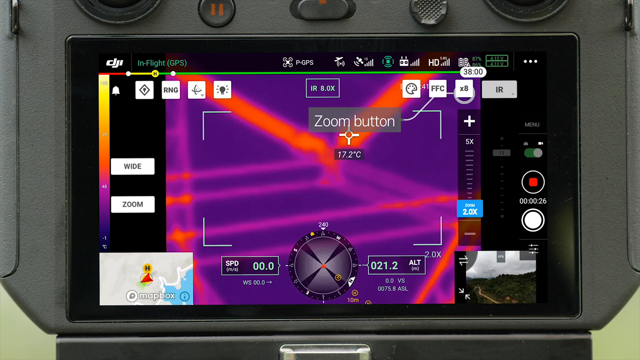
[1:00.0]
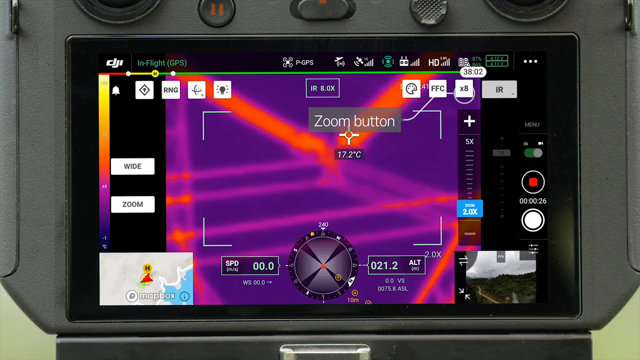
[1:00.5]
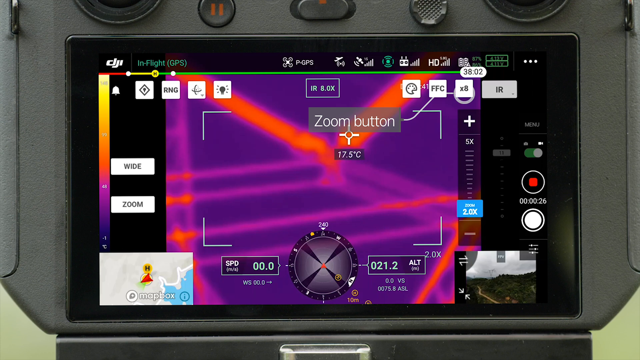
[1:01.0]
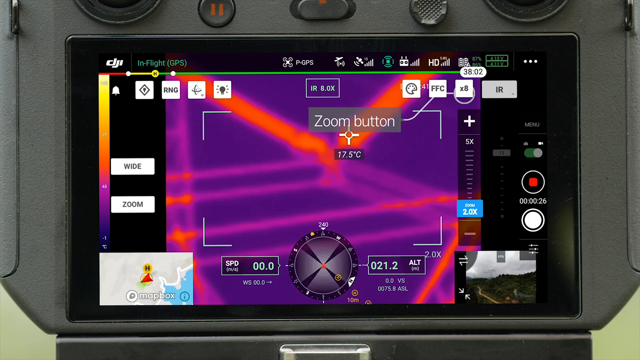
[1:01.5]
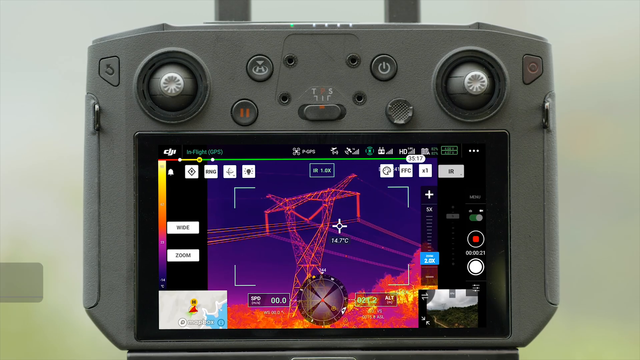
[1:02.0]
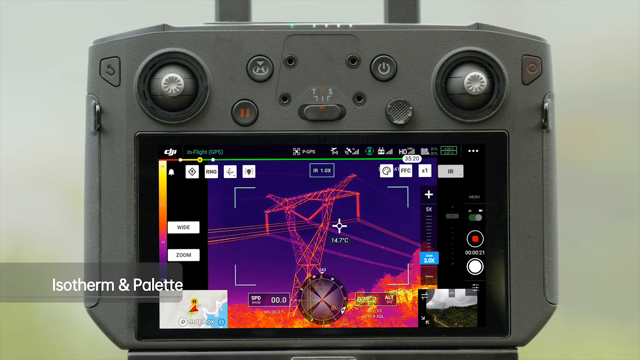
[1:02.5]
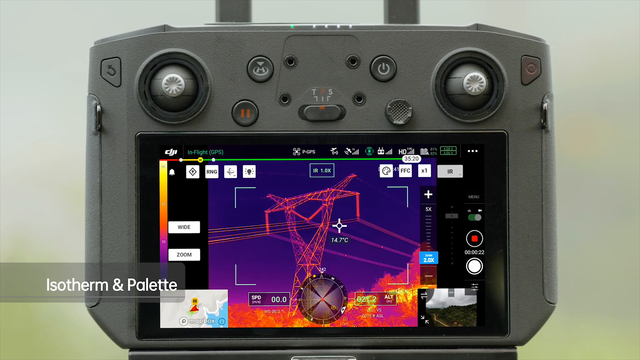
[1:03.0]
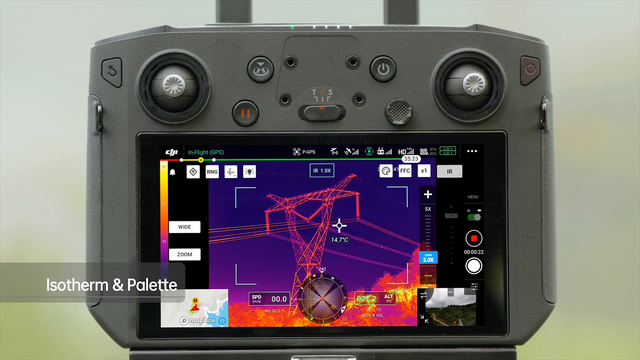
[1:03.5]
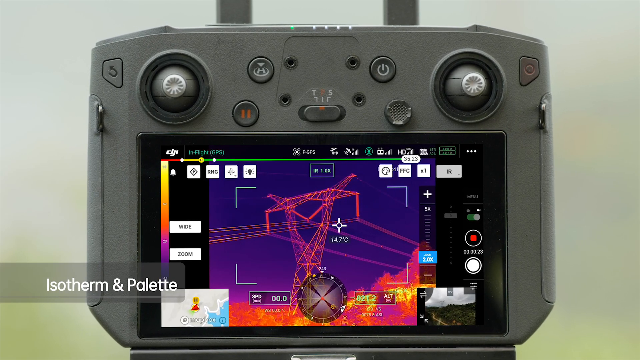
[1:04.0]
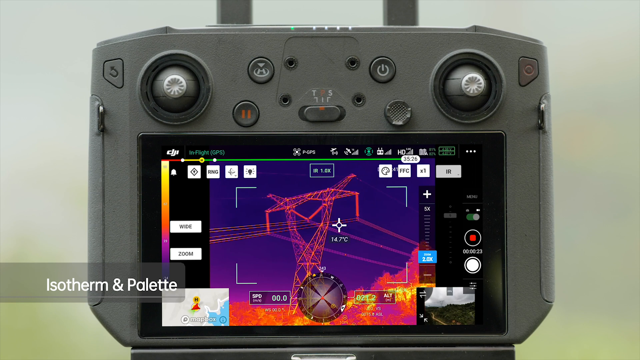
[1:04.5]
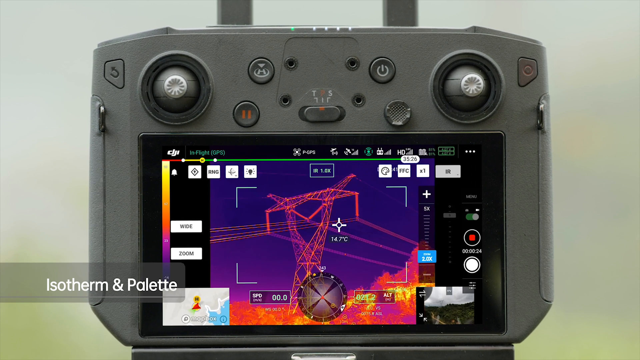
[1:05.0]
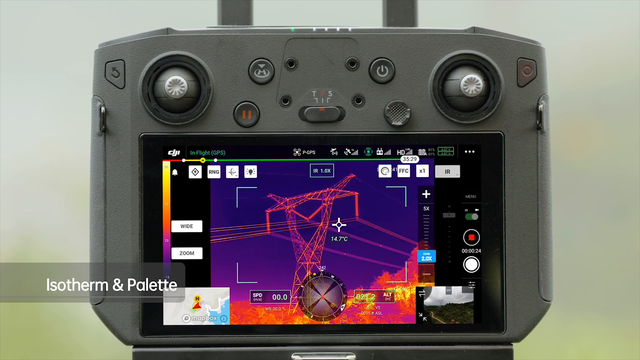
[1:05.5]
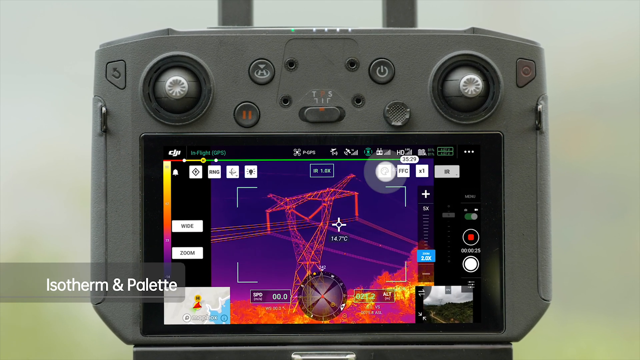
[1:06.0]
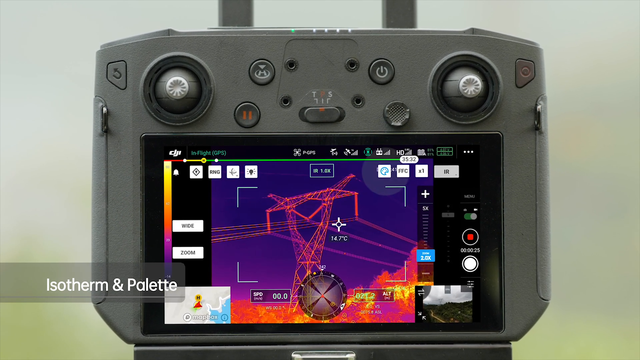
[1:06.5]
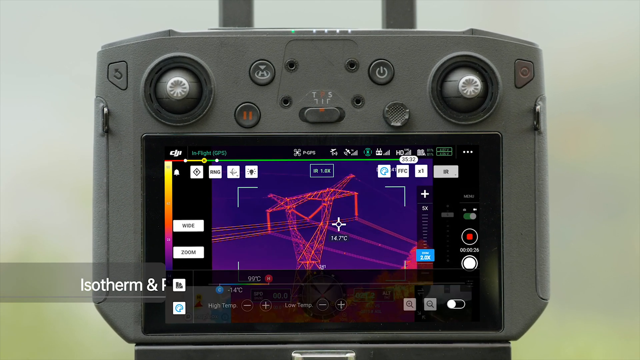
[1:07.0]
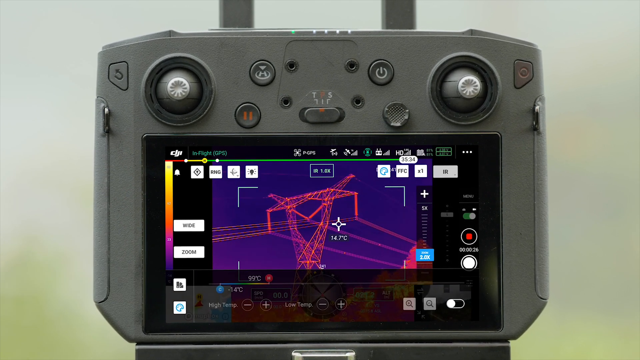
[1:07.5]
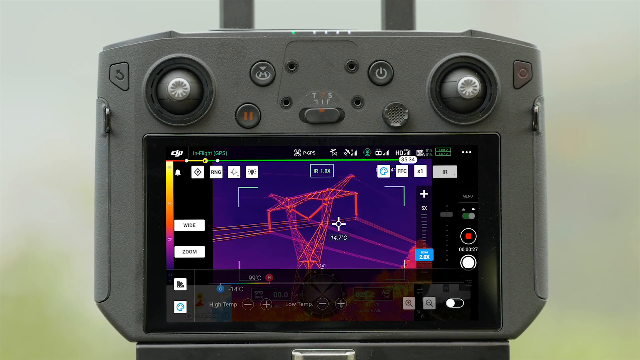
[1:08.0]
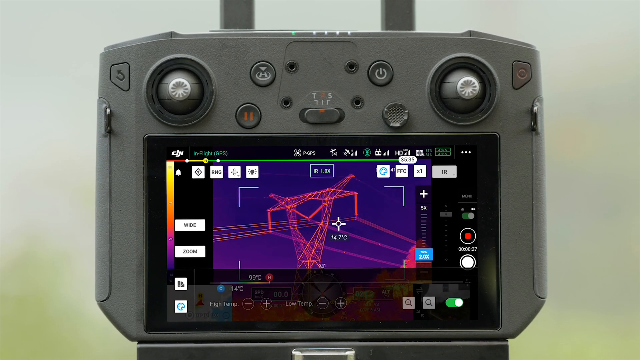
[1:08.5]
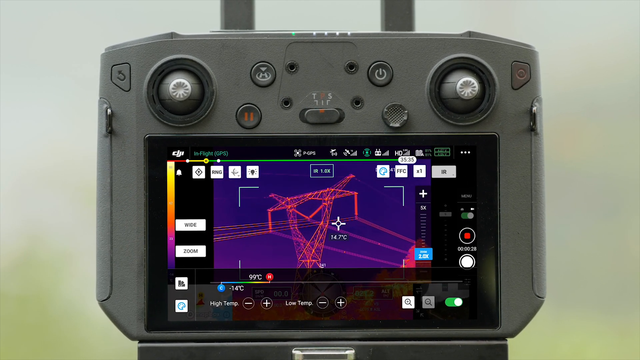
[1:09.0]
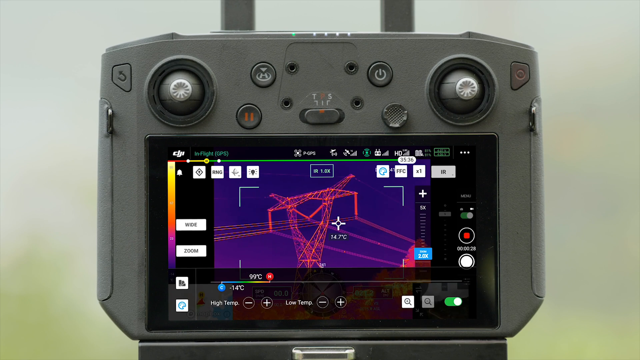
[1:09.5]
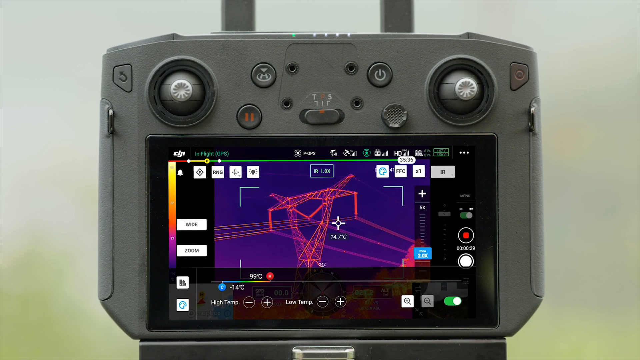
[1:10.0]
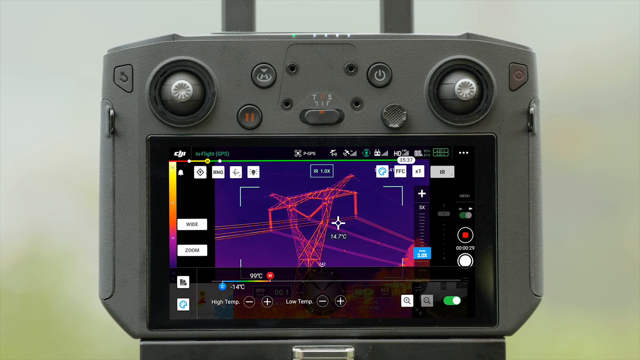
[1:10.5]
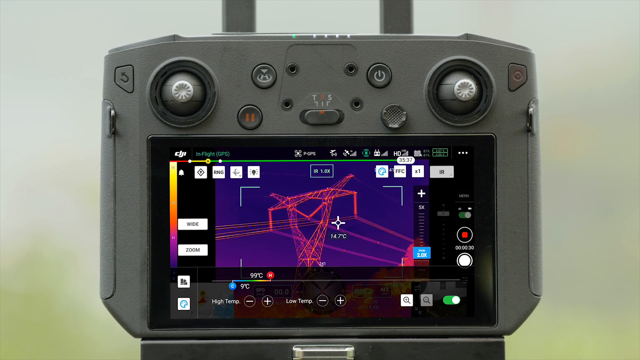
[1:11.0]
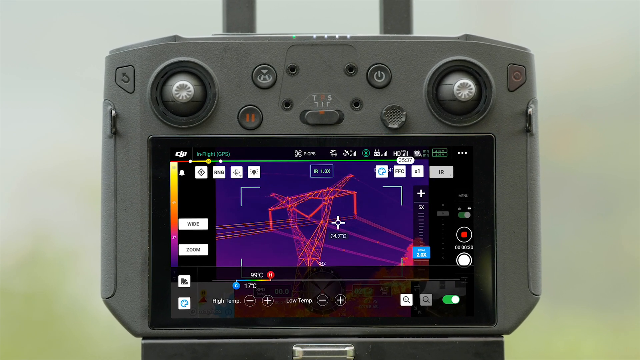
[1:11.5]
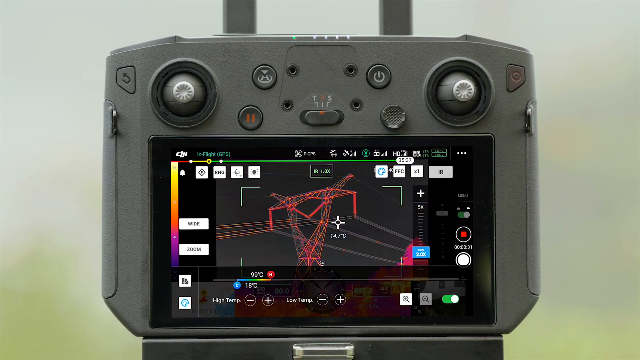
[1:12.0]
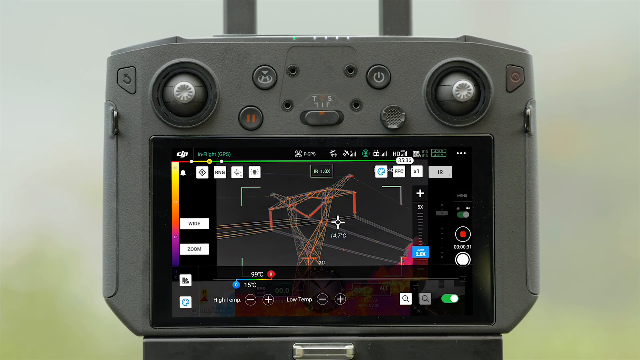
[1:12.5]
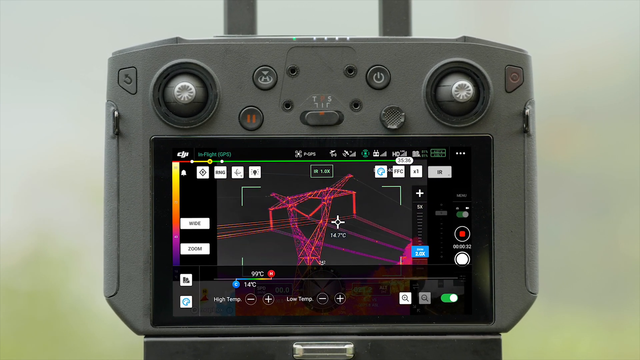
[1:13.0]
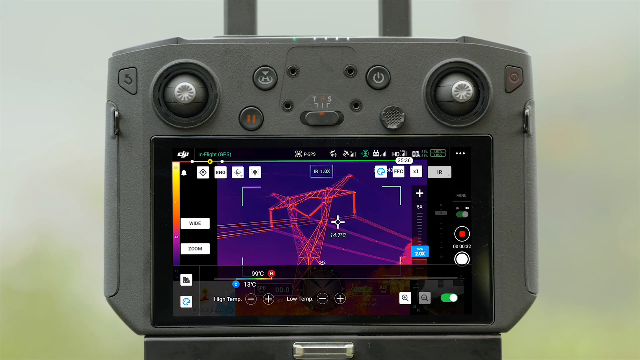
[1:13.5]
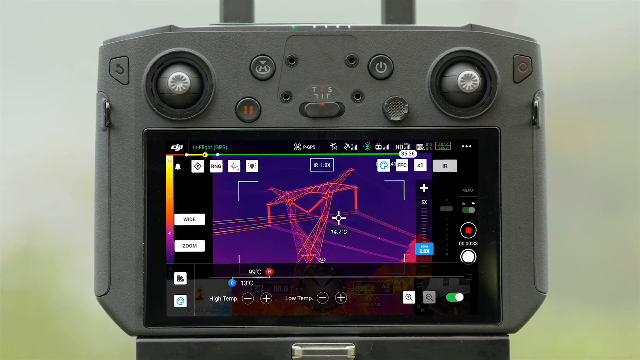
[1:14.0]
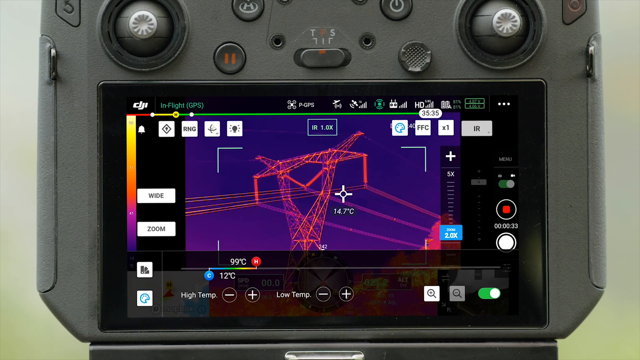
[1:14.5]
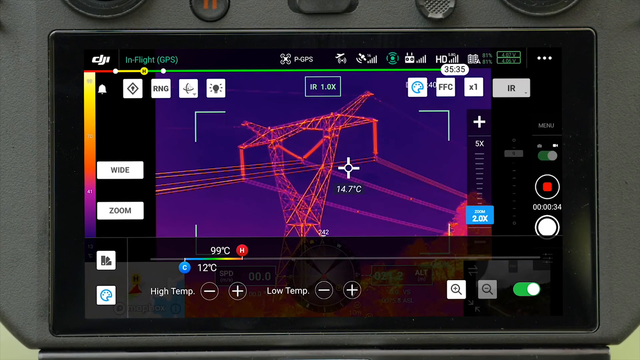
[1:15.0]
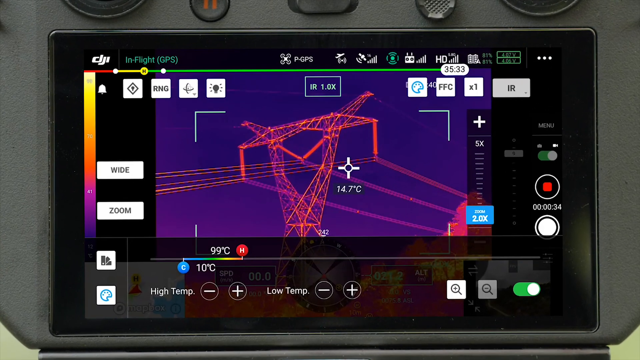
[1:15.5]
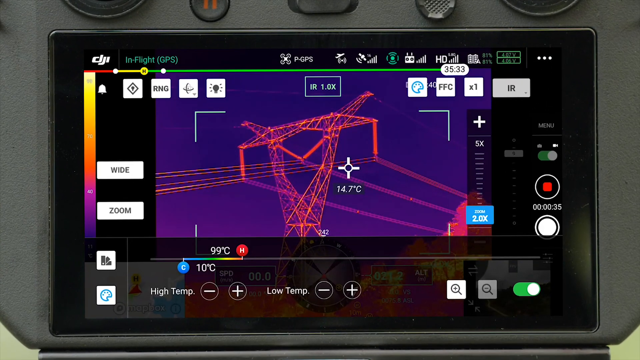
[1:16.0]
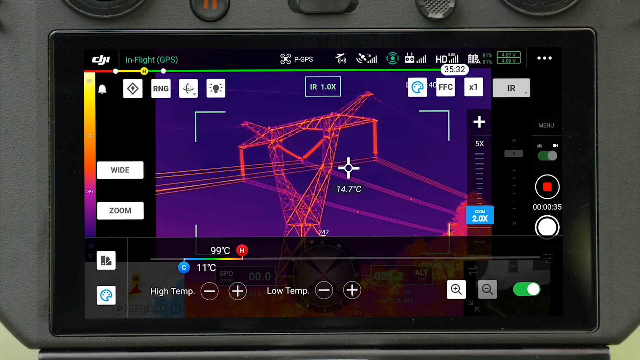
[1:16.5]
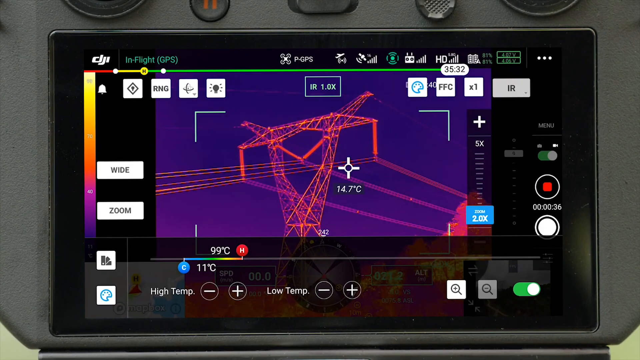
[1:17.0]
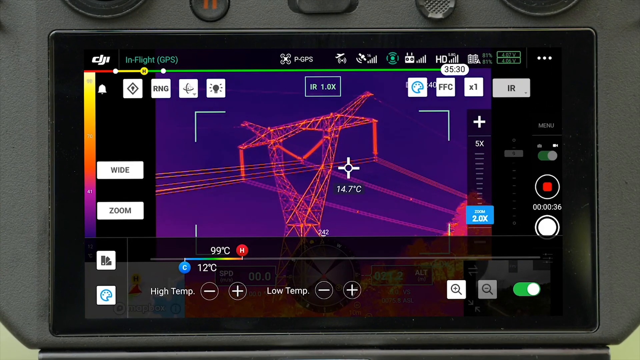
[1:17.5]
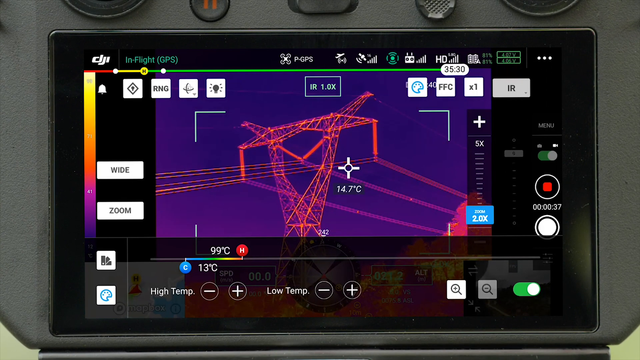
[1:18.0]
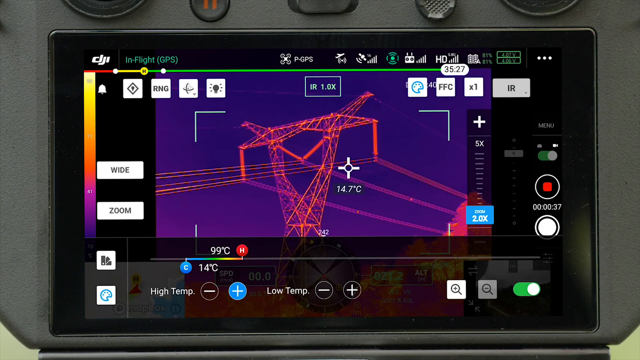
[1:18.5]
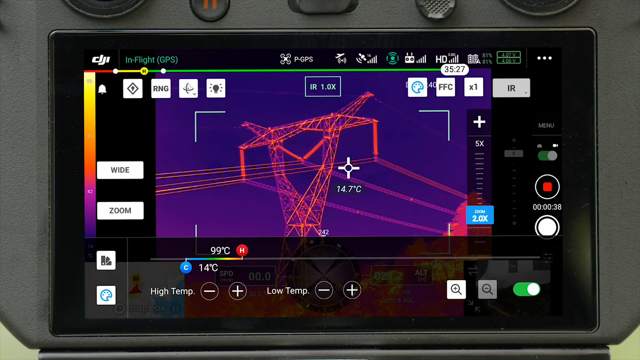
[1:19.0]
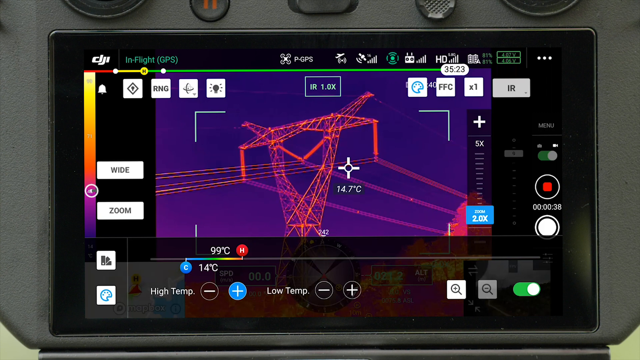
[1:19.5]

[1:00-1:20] The whole remote is shown again against a blurred grey-green background. In the bottom right is a grey box with text that includes "isotherm". On the remote's screen, in the center, is a heatmap of the pylon, with the tops of the trees visible at the bottom. At the bottom left is a map of the drone's geographical location, and at the bottom right is a view of the top of the drone itself. At the top right of the pylon image are three white boxes and one grey one. The first shows an image of a paint palette, which is highlighted and then turns blue. At the bottom of the screen a line appears from left to right, representing the temperature of the heat map. With a click, the cold marker on the left moves toward the hot marker on the right.